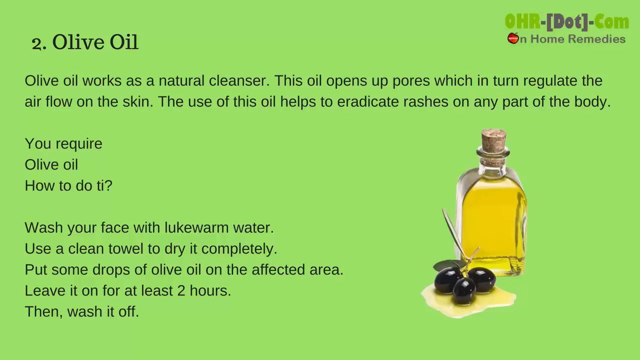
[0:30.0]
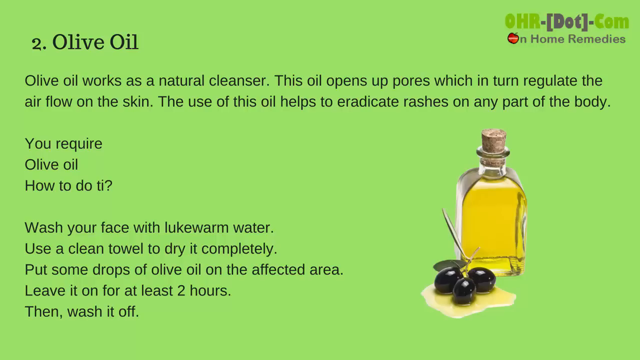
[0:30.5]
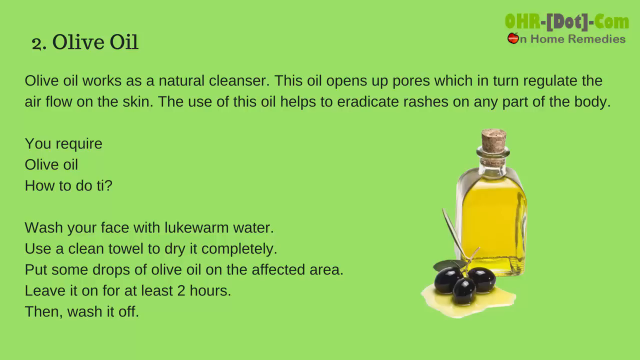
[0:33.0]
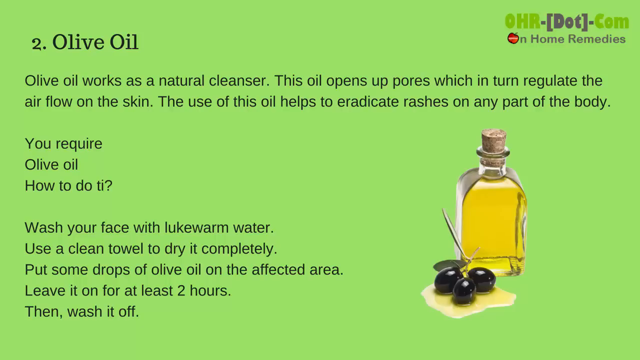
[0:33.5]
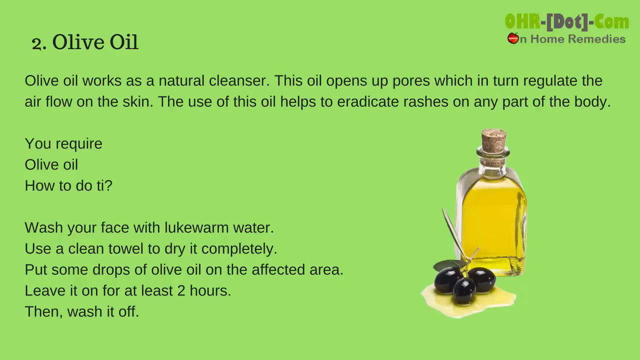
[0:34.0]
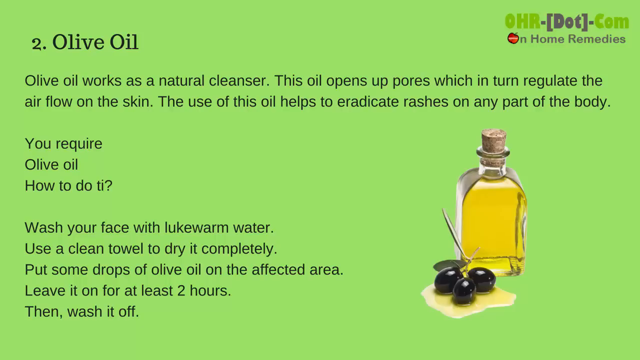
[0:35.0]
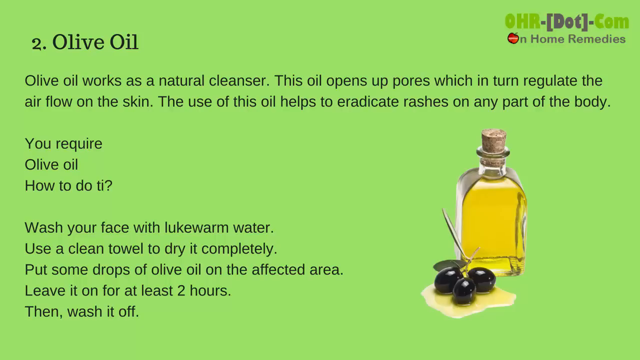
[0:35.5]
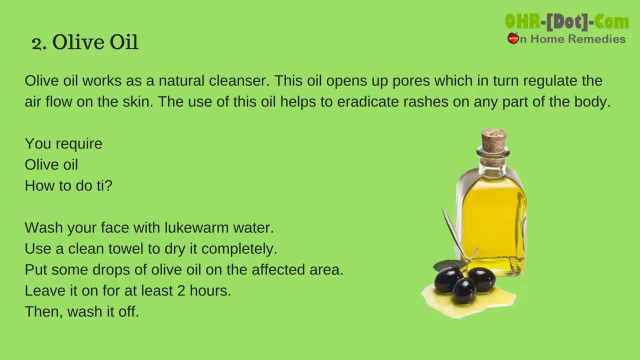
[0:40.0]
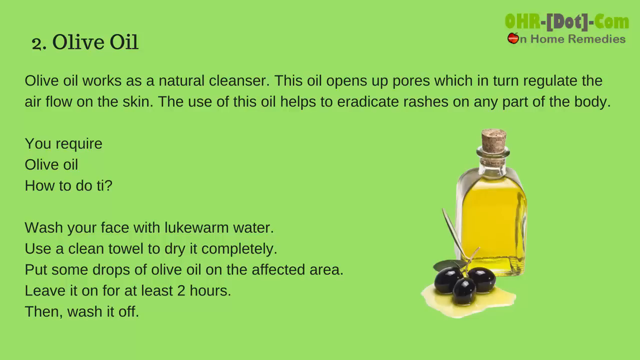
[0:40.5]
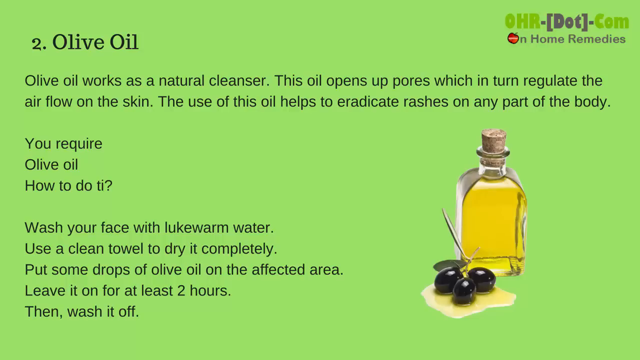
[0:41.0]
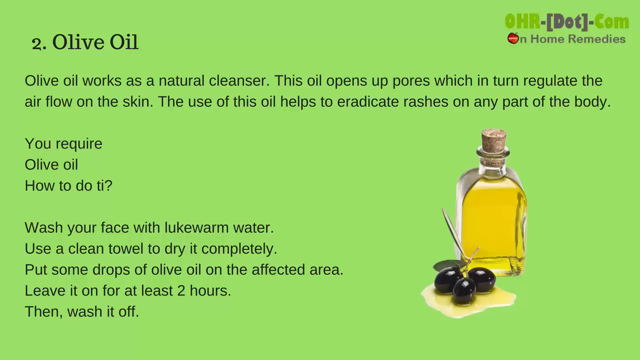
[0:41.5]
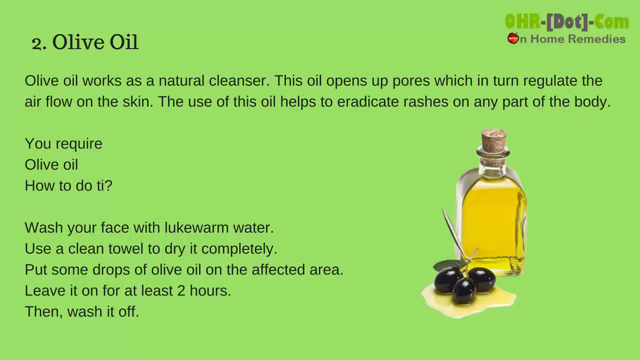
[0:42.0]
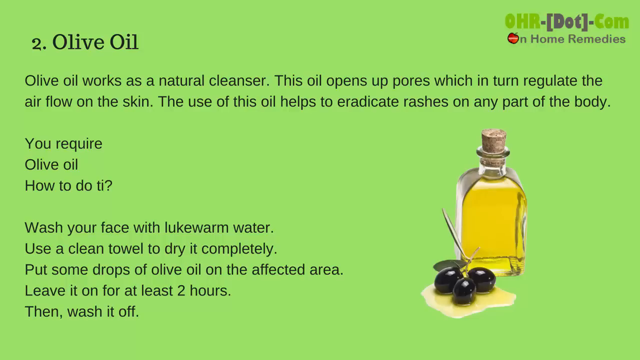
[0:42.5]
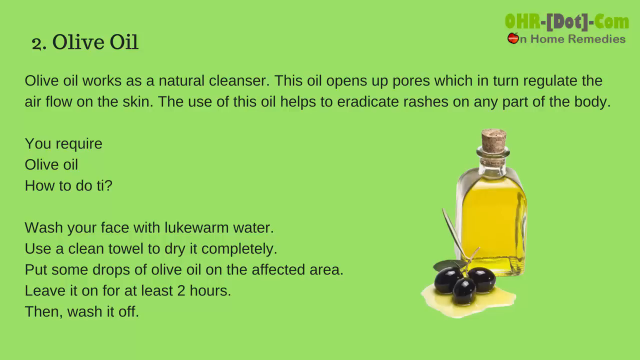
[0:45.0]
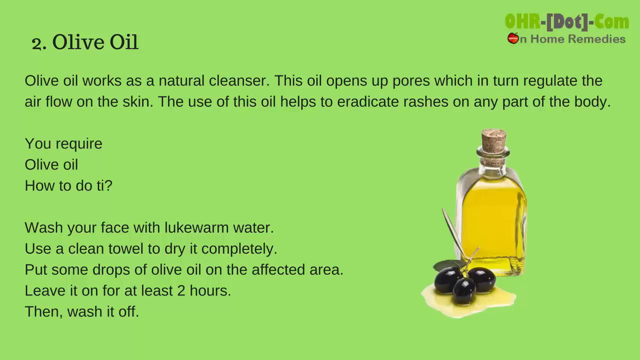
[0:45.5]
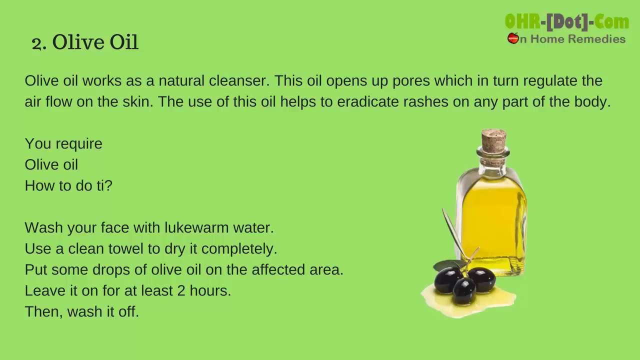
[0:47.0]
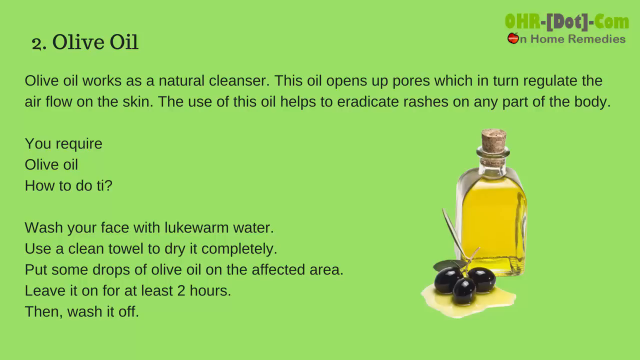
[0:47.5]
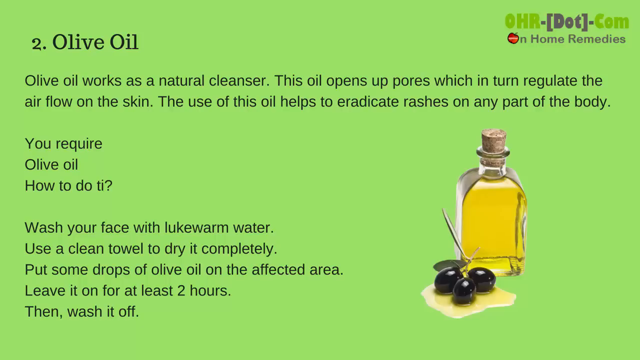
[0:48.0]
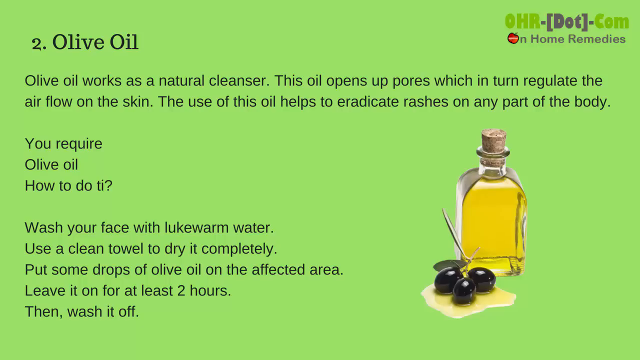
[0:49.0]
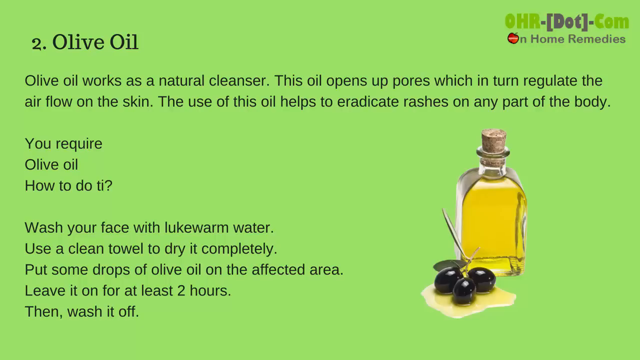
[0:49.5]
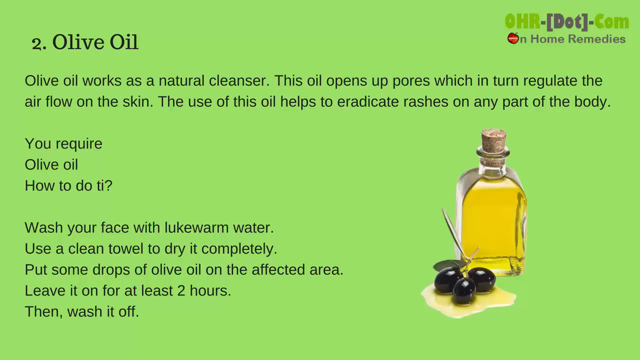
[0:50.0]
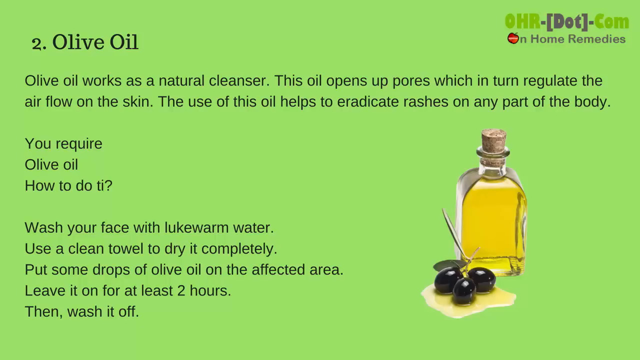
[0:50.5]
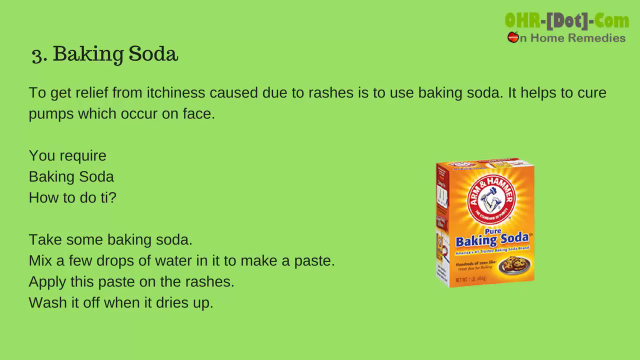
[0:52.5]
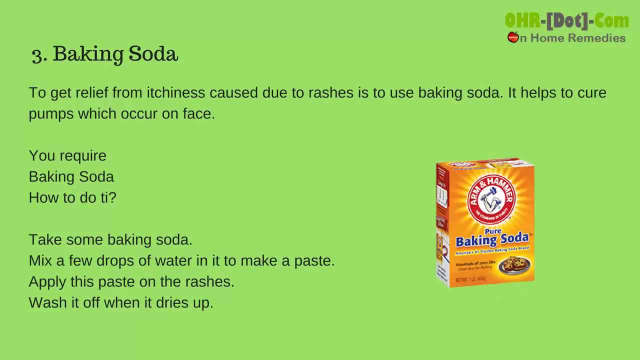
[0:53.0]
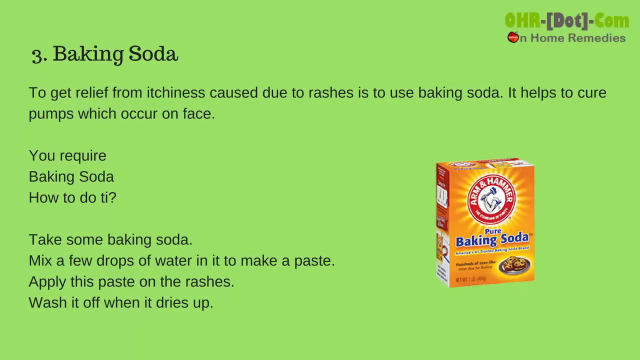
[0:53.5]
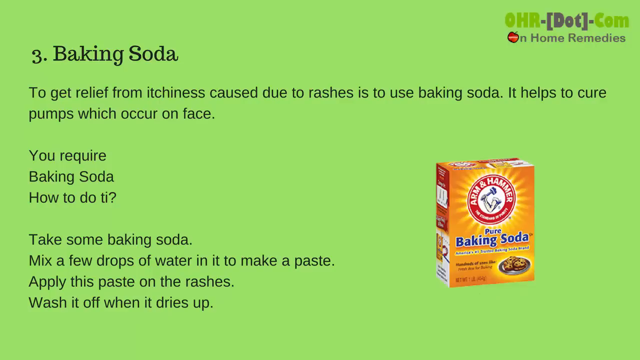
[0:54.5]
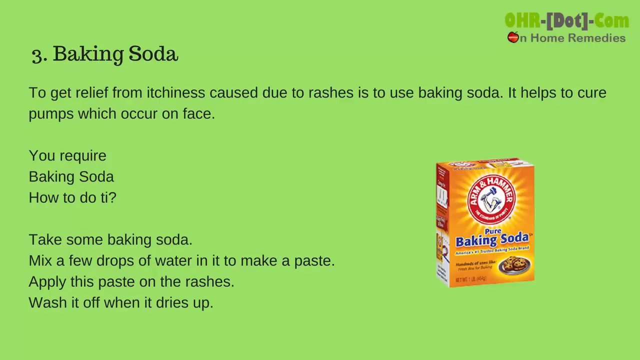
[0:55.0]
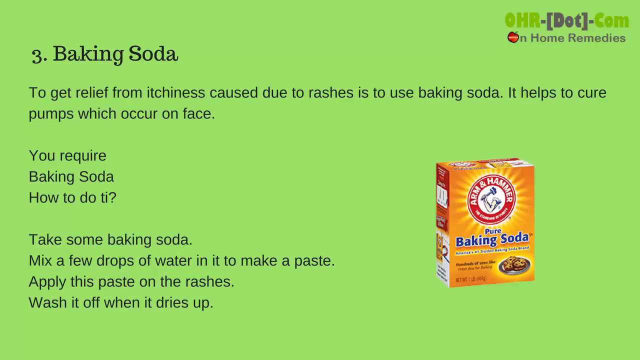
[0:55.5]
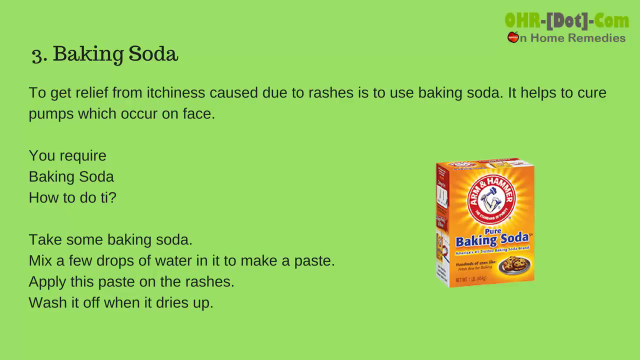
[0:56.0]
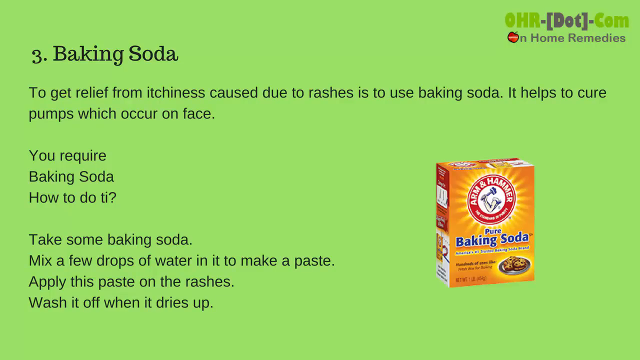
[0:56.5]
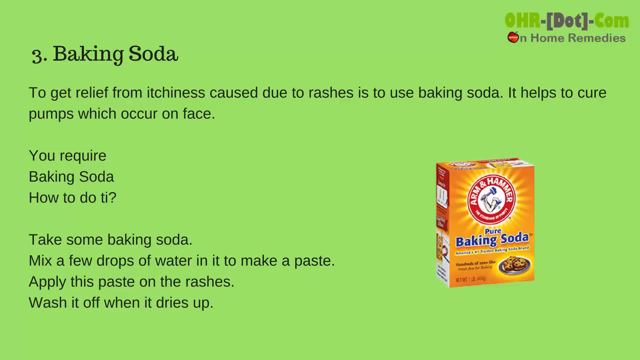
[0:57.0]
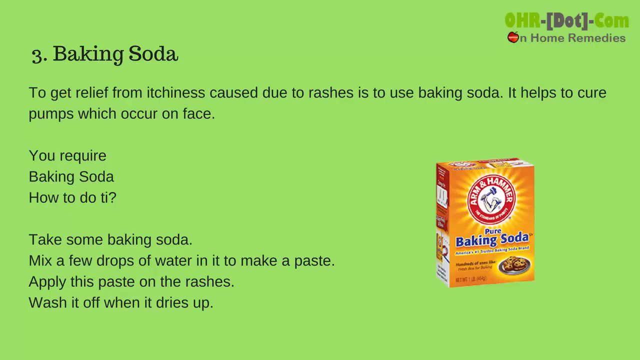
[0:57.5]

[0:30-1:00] A green screen reads "olive oil works as a natural cleanser", presenting skin care advice on using the oil to help eradicate rashes on the body. It lists that olive oil is required and shows the steps: wash the face using lukewarm water, put some drops of oil on the affected area, and leave it on for at least two hours. A small container filled with olive oil is shown, with some black items on it. The advert is designed in green, and the company logo is OHR.com in home remedies.